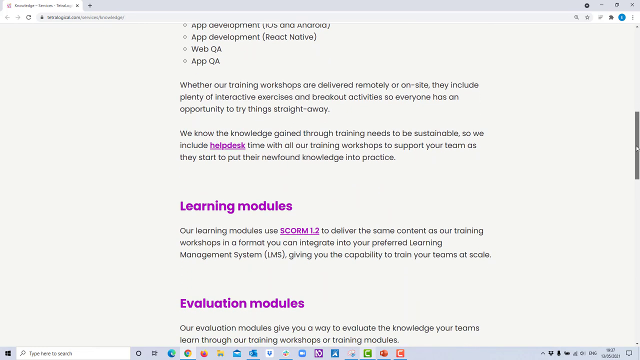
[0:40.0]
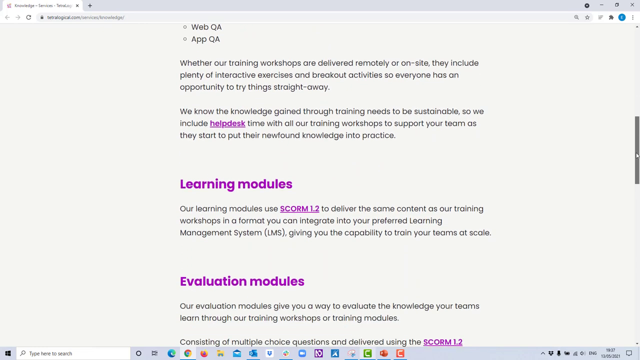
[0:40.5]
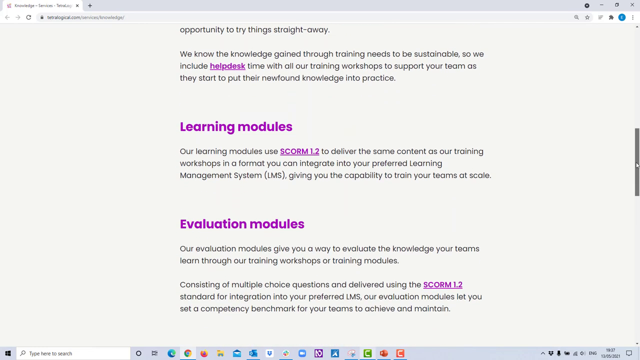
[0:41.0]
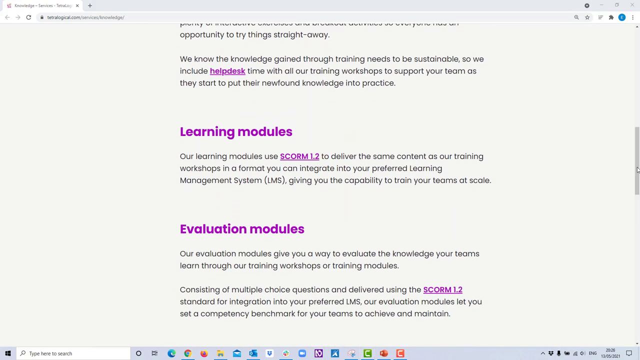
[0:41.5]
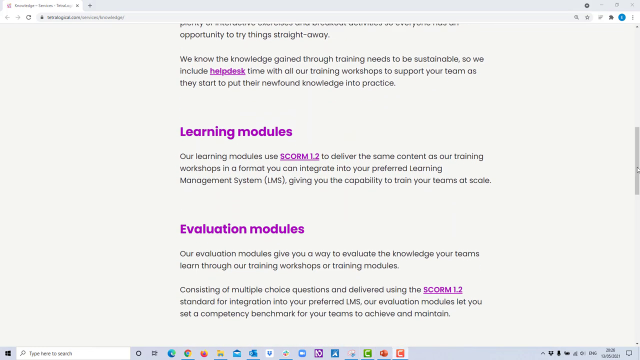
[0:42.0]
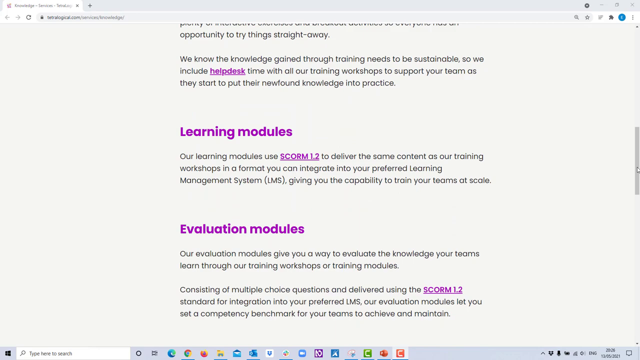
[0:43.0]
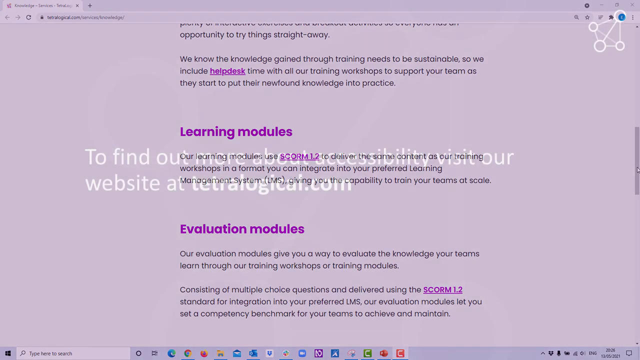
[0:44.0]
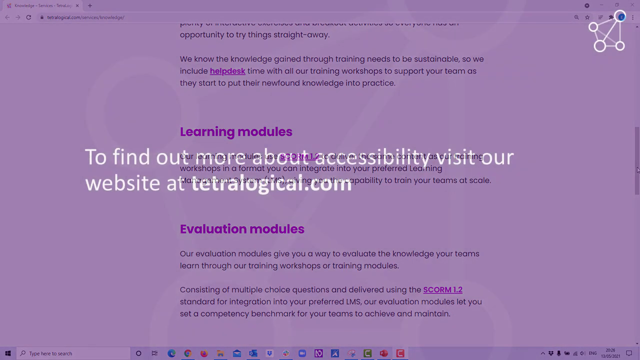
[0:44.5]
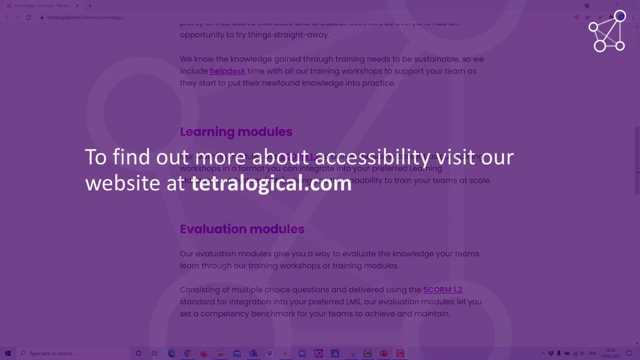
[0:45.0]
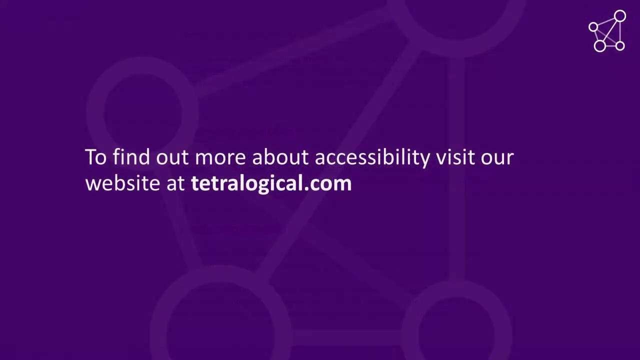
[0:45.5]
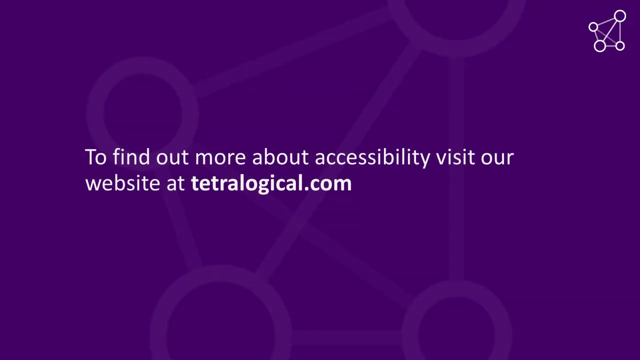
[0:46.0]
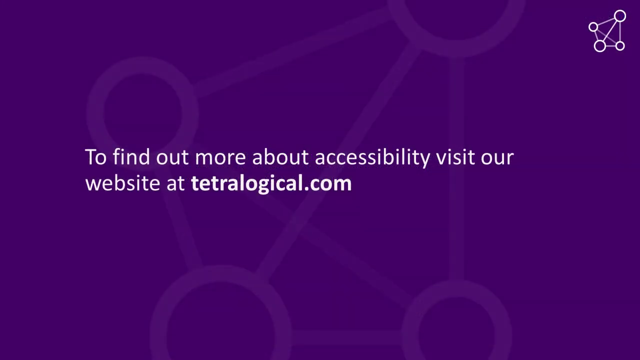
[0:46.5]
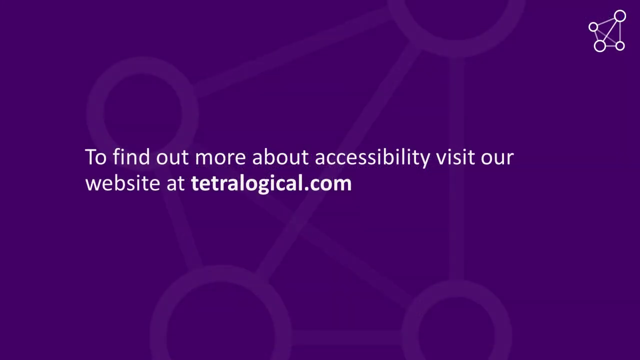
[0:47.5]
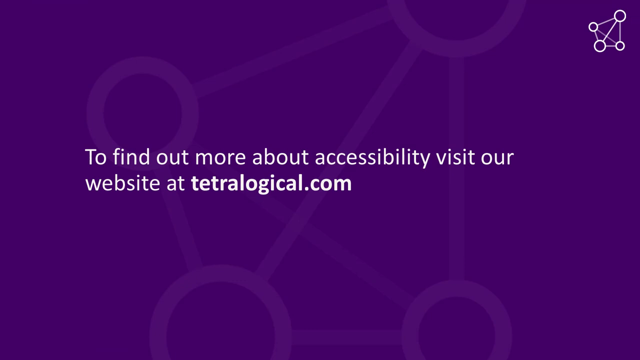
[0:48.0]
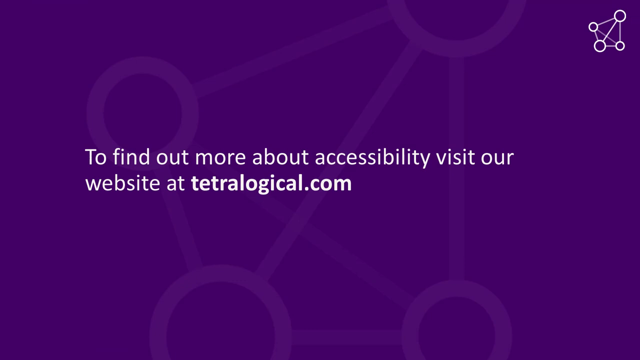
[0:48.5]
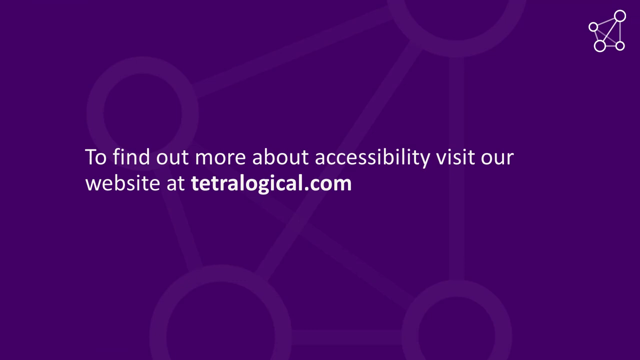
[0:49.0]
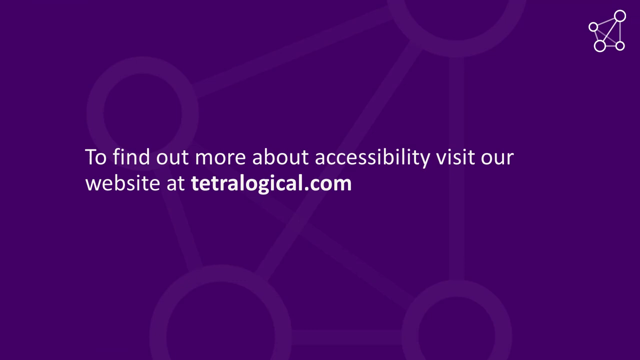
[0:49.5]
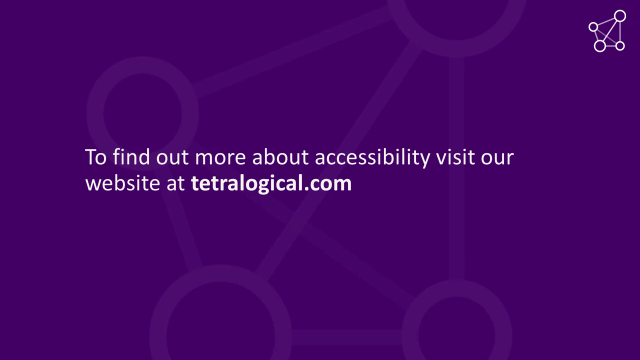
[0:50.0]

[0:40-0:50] A web page is shown starting from the middle, so the header may not be visible. There are a few paragraphs, and the content is about web design, with bullet points for web QA and app QA. A couple of paragraphs are below that, followed by a section on learning modules and evaluation modules. The page scrolls down through this content. Then another page appears that says, "To find out more about accessibility, visit our website at tetralogical.com." After that, the video ends.